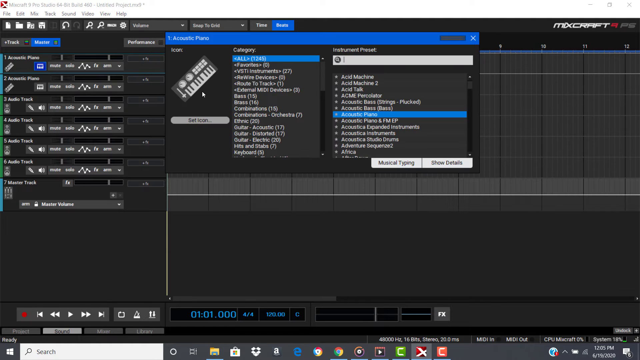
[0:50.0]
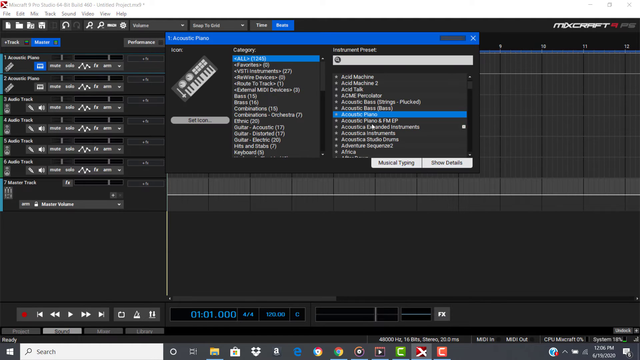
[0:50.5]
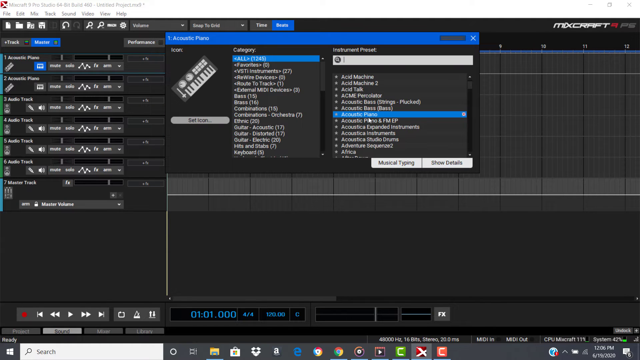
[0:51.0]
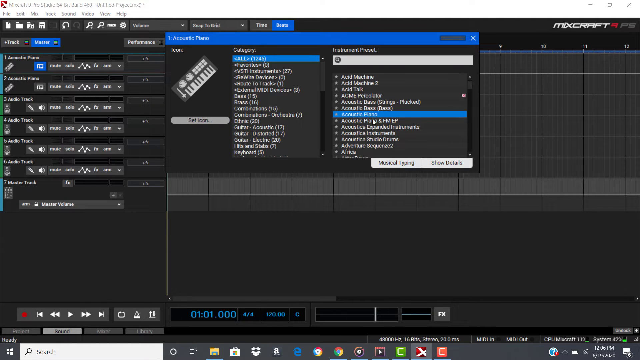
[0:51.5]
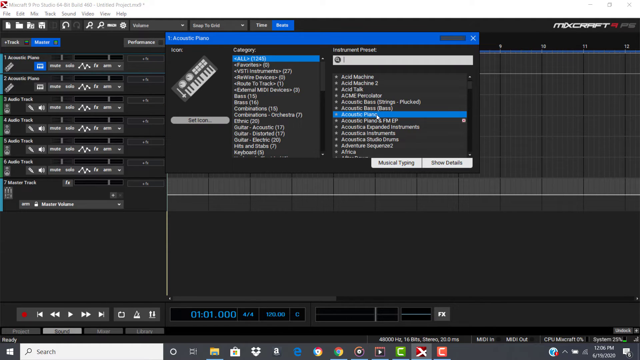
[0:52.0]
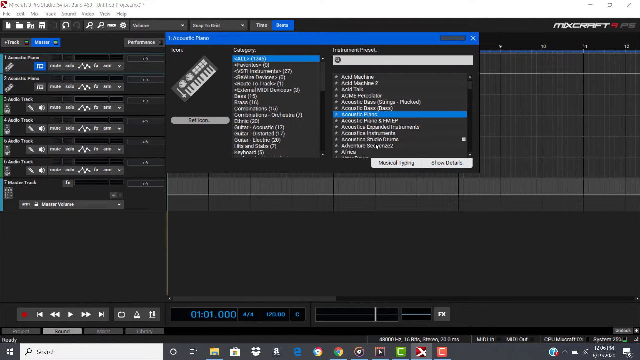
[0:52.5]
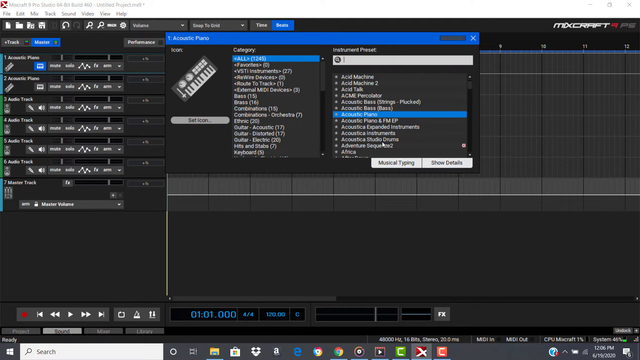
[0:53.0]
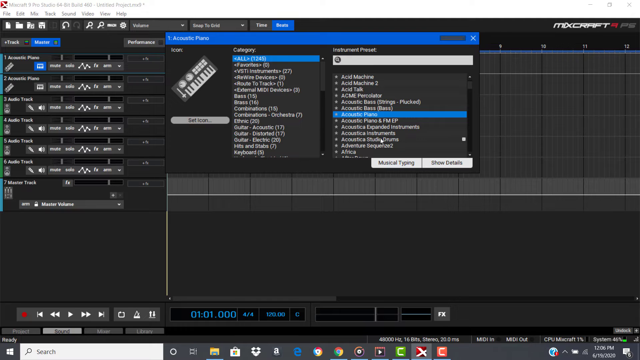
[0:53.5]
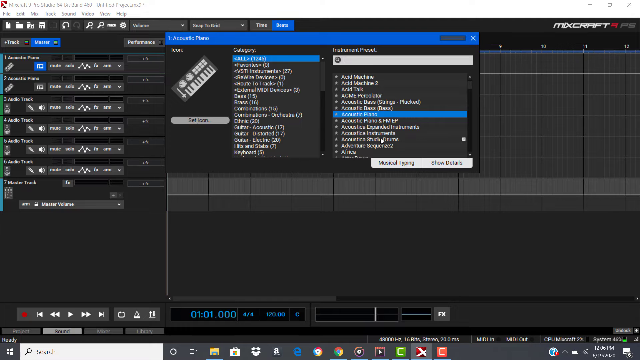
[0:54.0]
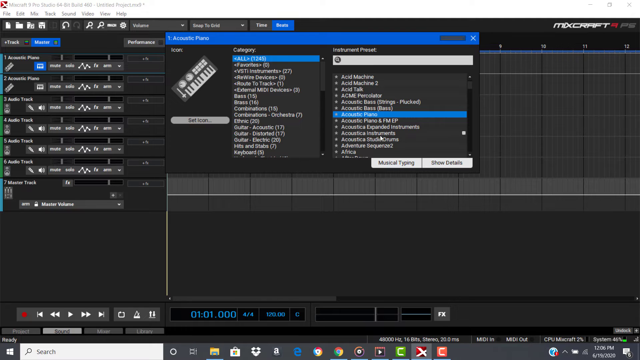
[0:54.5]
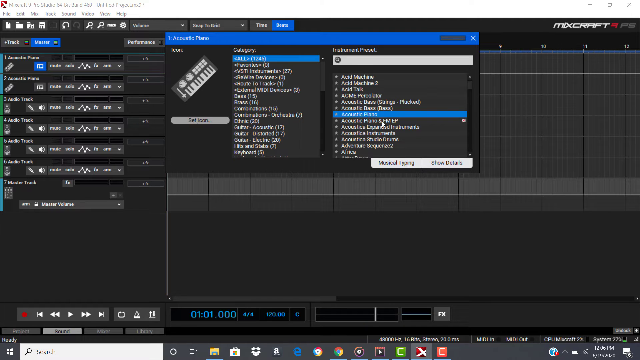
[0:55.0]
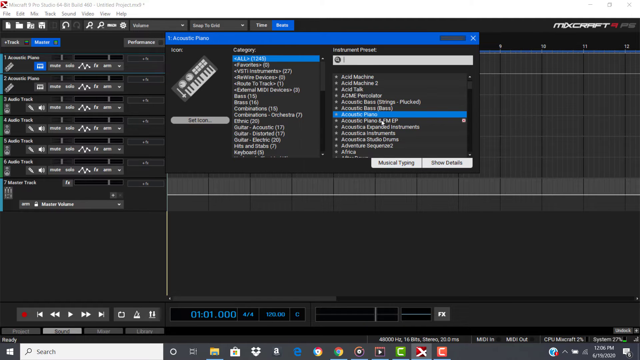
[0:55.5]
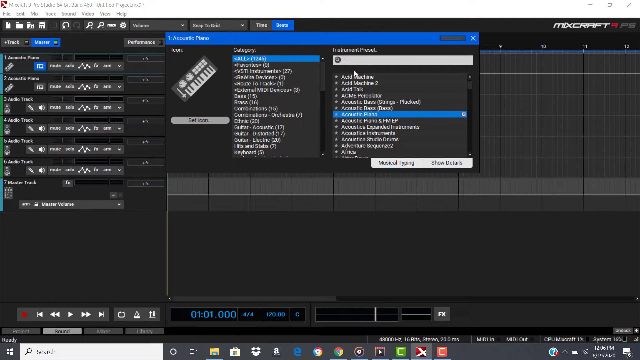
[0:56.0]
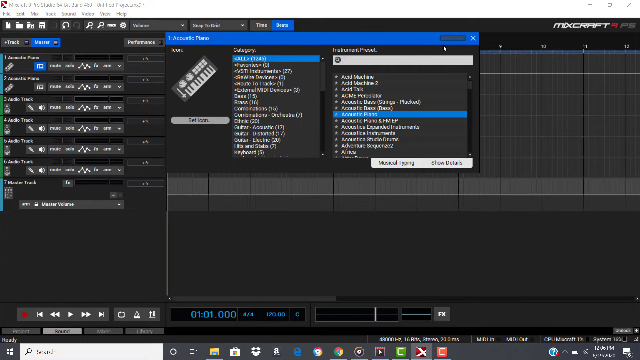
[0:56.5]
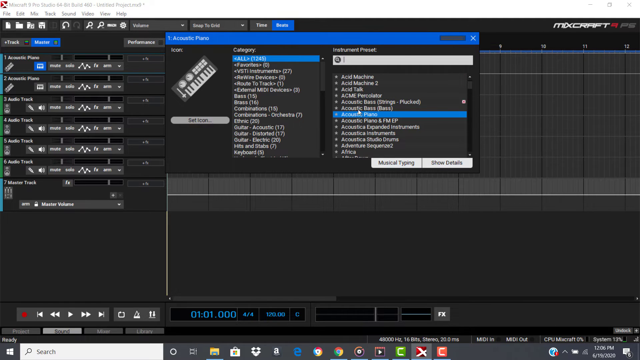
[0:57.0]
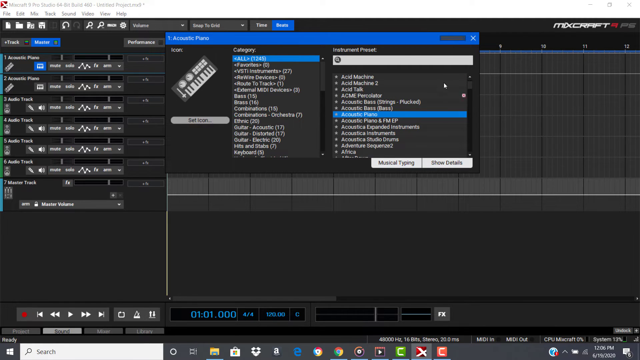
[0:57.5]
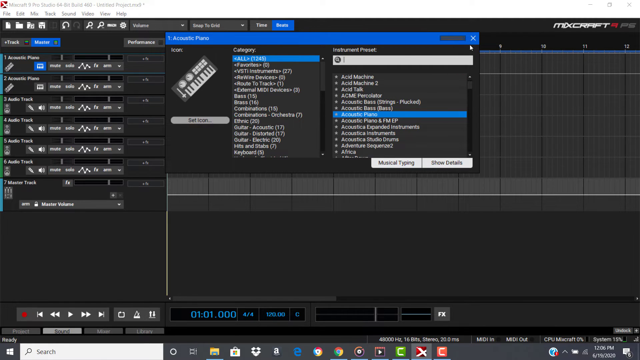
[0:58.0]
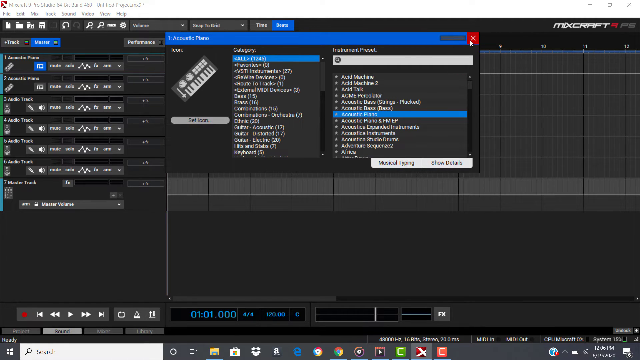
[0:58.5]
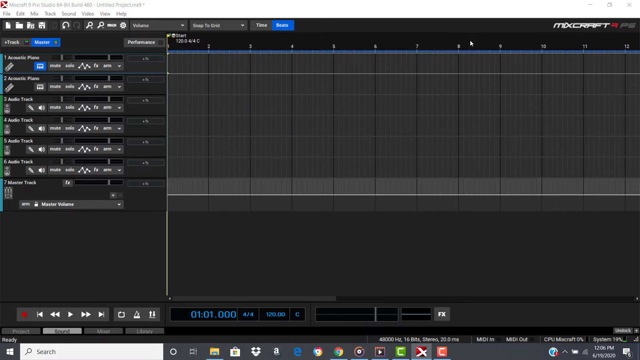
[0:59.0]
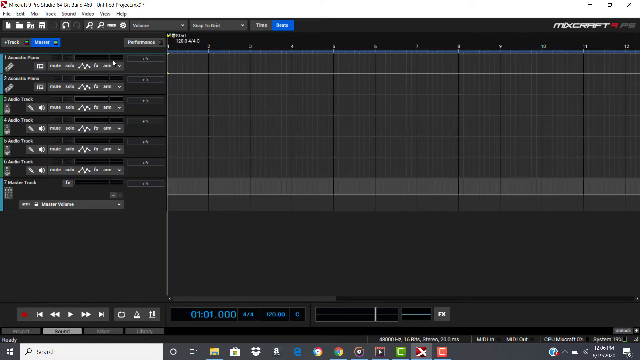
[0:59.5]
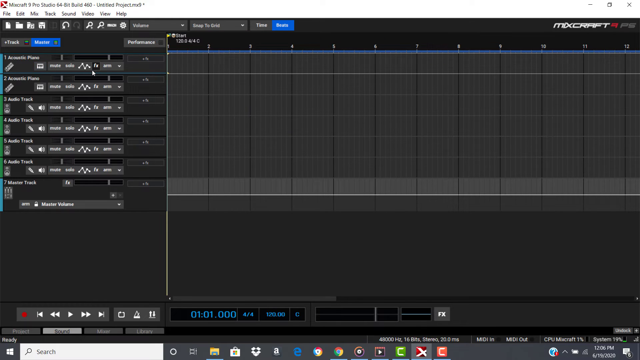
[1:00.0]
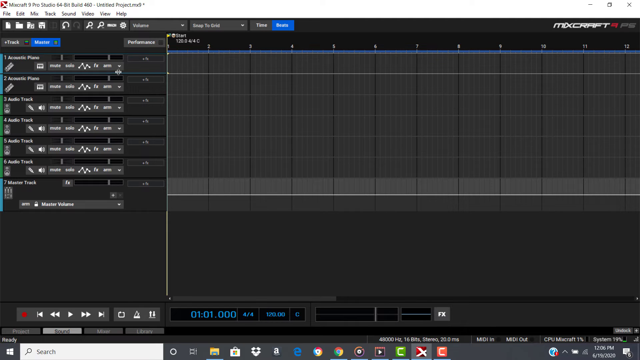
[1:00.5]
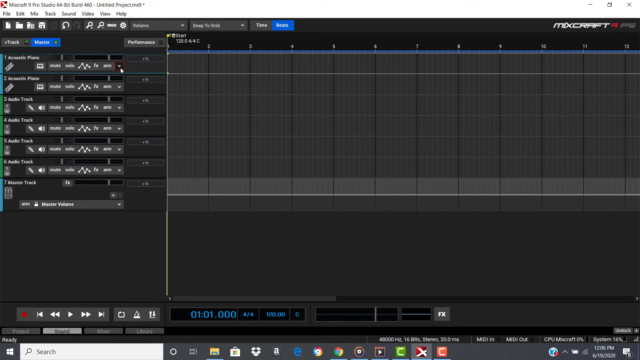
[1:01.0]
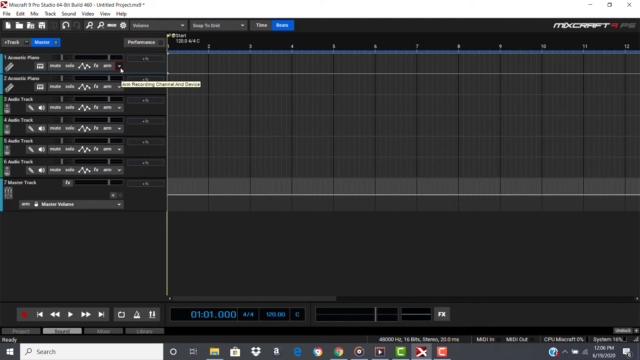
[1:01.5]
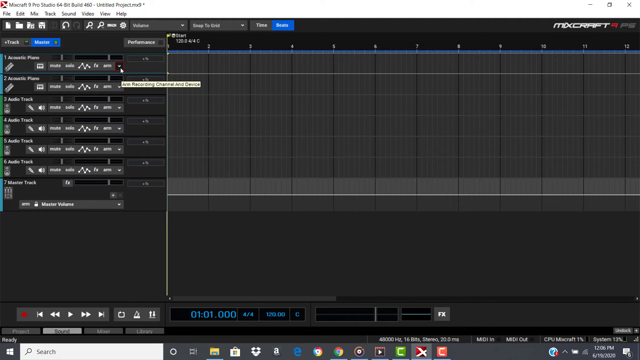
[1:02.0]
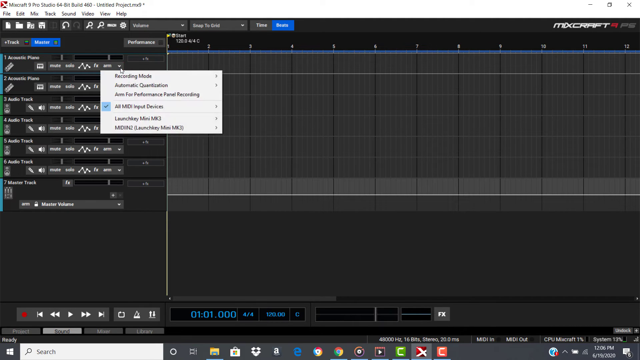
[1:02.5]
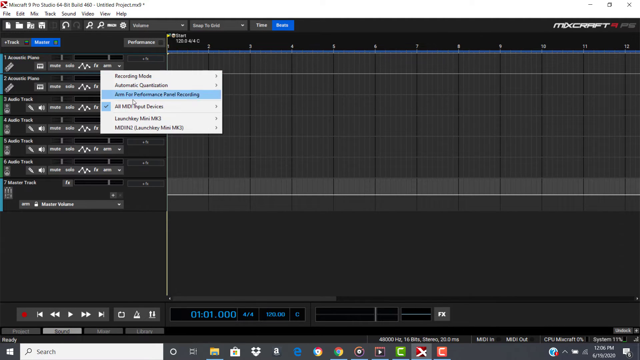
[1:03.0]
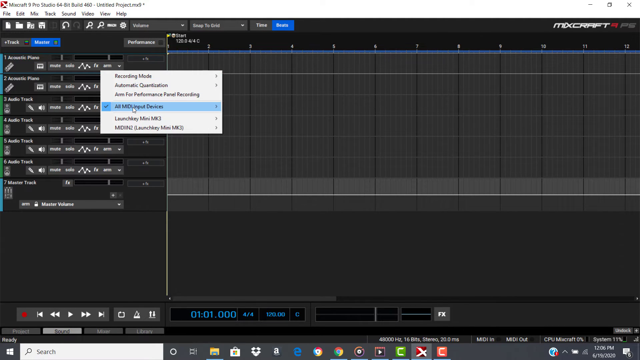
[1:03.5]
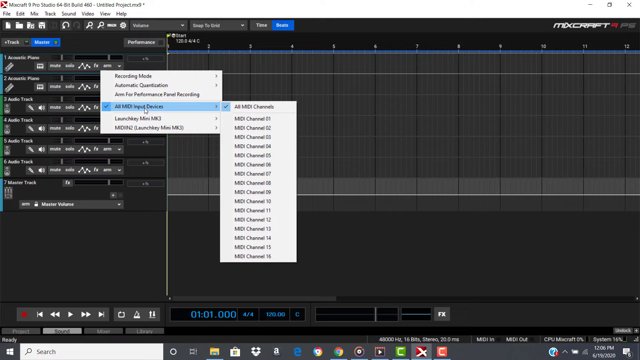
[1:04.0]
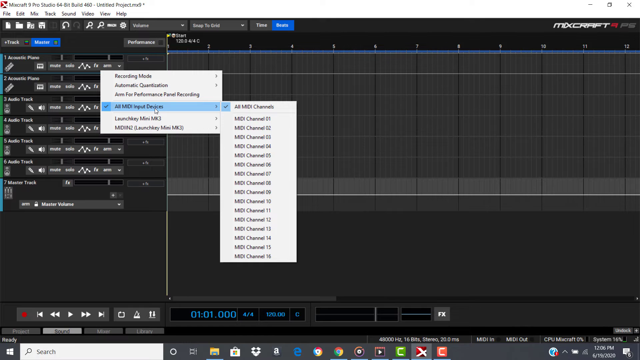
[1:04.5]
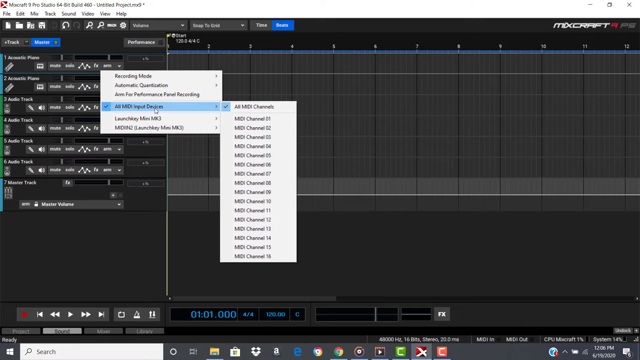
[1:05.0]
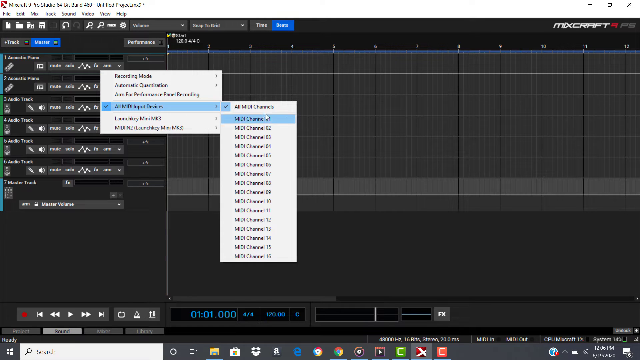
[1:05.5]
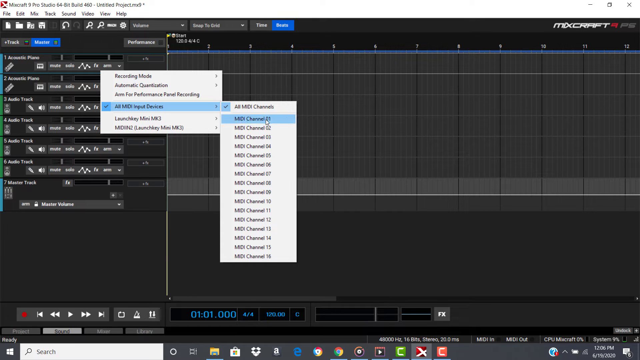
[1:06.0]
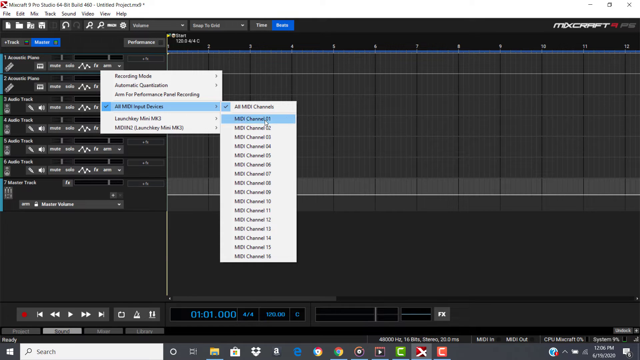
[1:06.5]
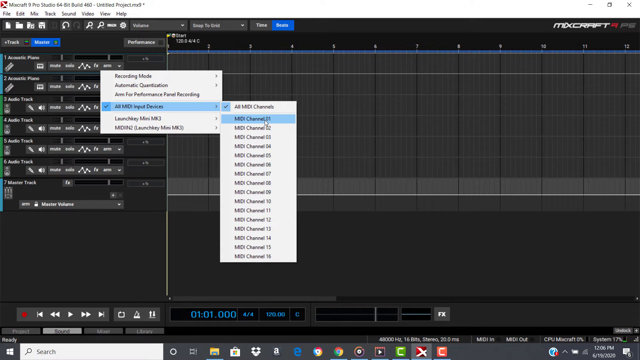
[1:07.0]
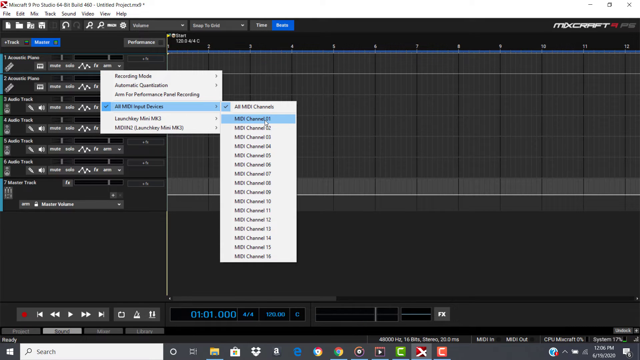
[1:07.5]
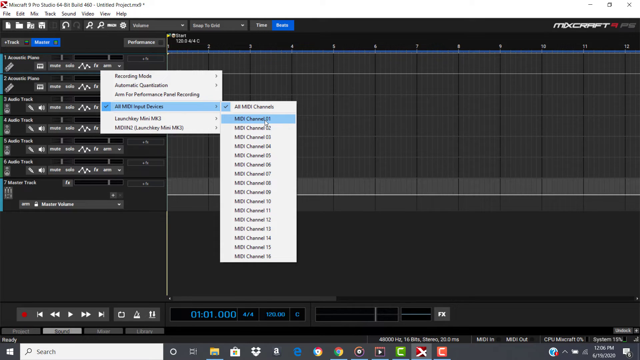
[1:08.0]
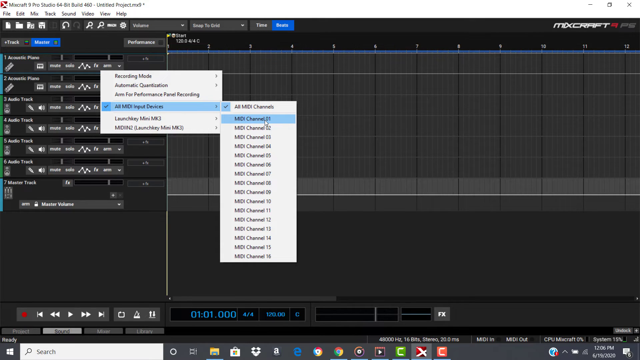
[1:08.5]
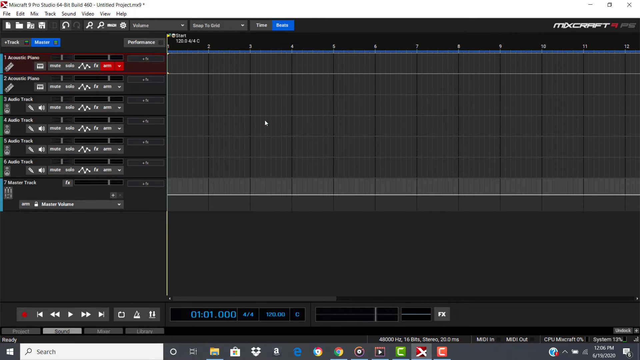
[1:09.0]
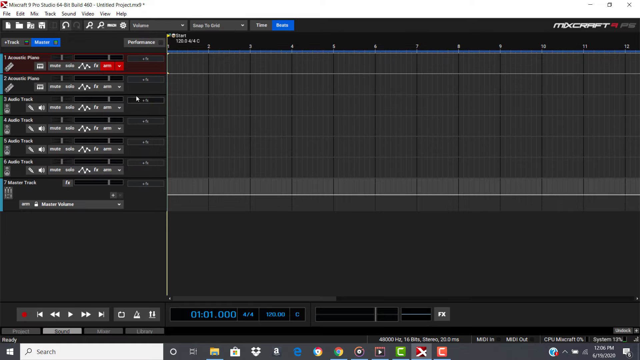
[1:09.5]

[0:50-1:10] The screen of someone's computer, maybe a laptop, shows software. The upper left corner has drop-down menus such as file, edit, sound and video, and the right side of the screen says "MixCraft". The software is very boxy, with lots of rows of gray boxes and different icons; the left side is numbered 1 through 7. A box for Acoustic Piano is open. The cursor, a little white pointy arrow, moves around, goes to a drop-down menu, selects and highlights a word, and then kind of spins around. The box is then closed with the X. The mouse goes back to the number 1, opens a drop-down, clicks on a couple of commands, and that opens the Acoustic Piano box again.